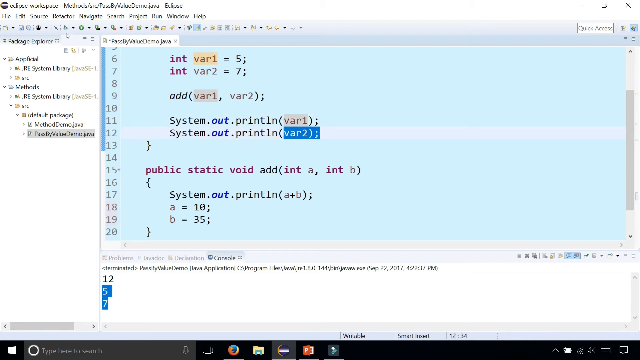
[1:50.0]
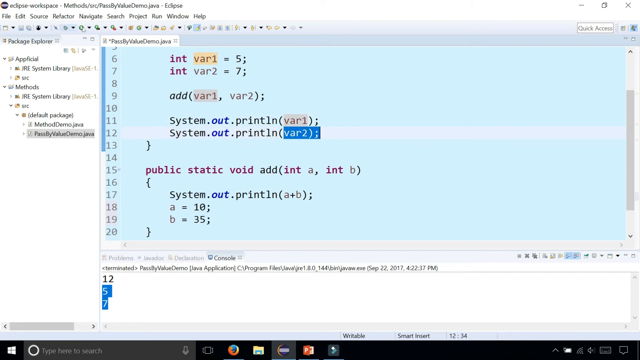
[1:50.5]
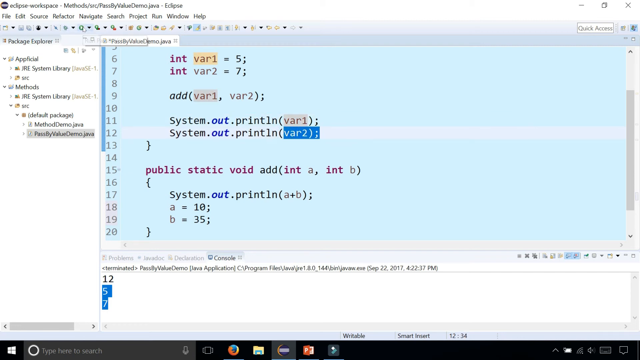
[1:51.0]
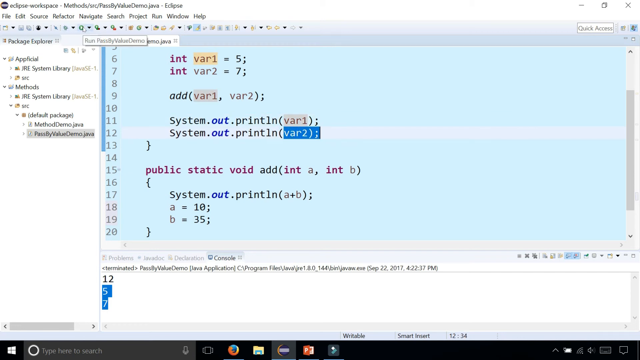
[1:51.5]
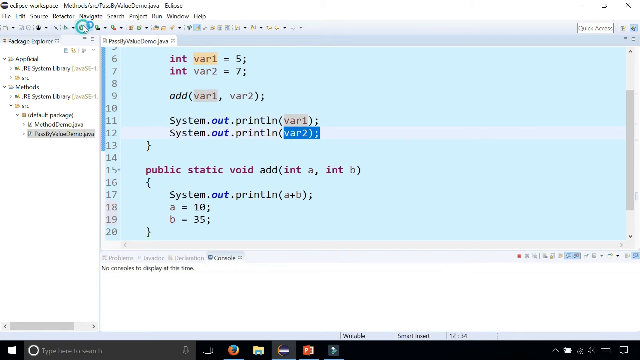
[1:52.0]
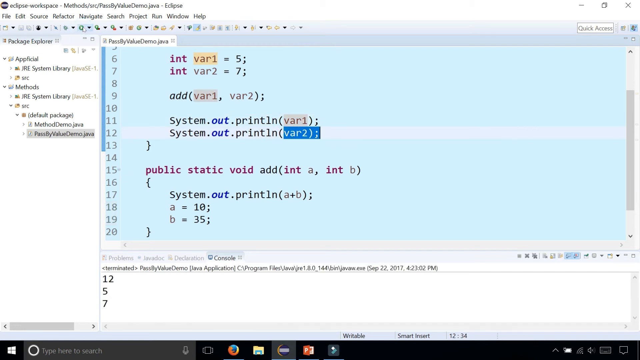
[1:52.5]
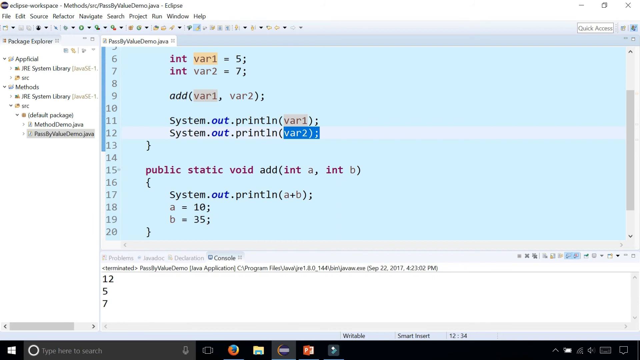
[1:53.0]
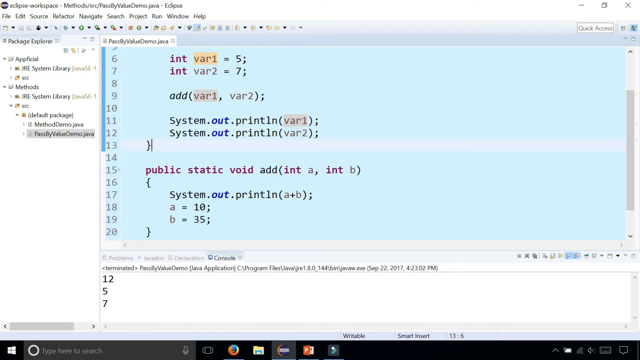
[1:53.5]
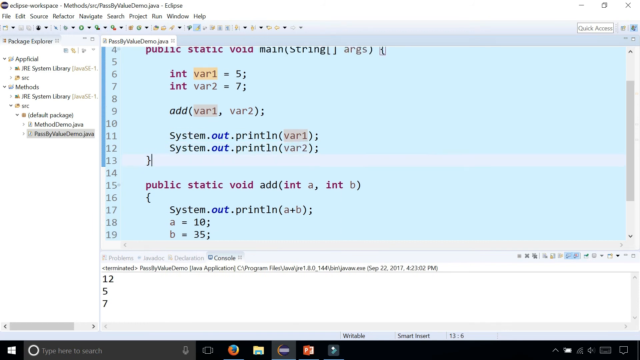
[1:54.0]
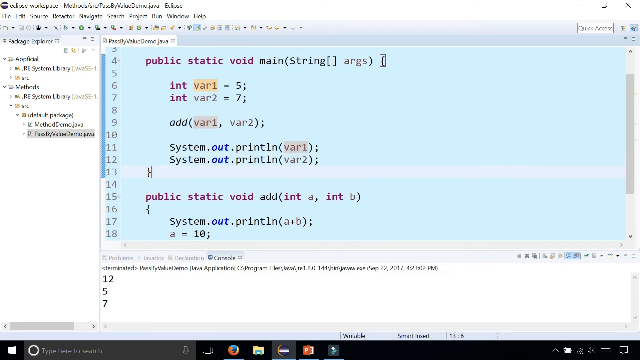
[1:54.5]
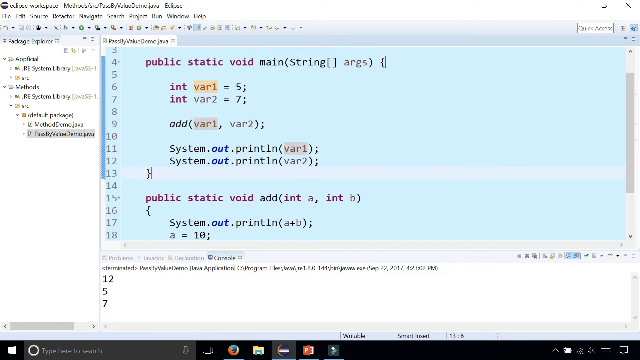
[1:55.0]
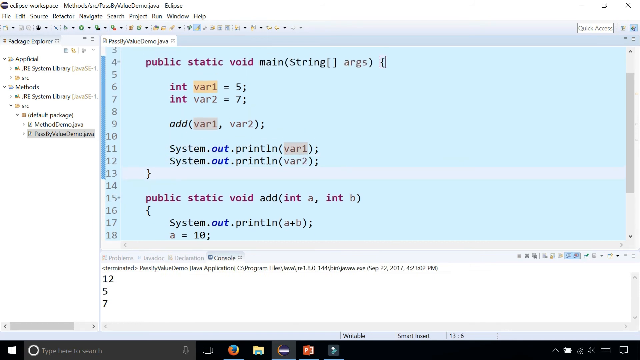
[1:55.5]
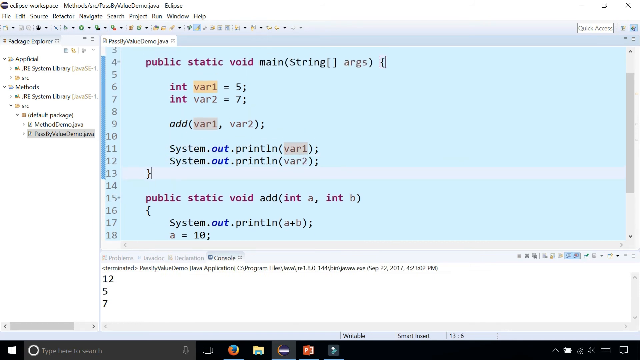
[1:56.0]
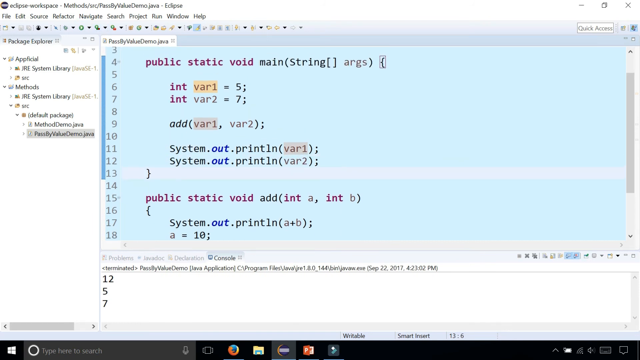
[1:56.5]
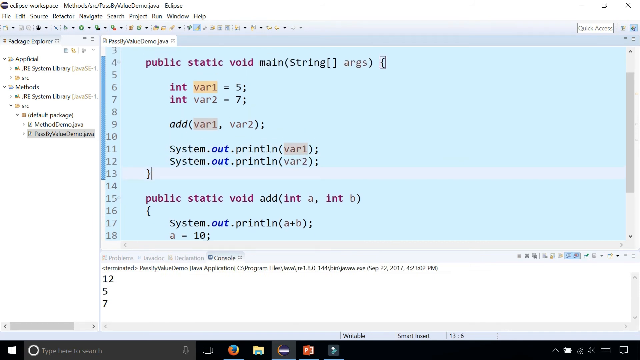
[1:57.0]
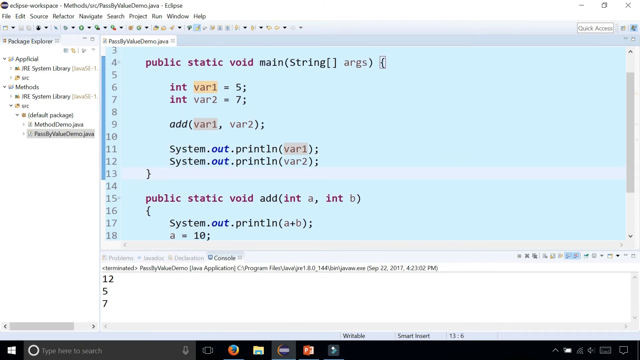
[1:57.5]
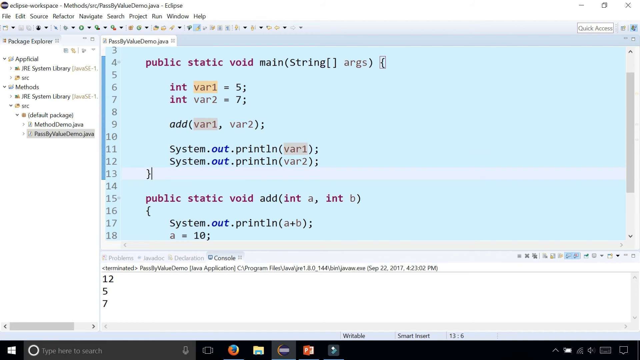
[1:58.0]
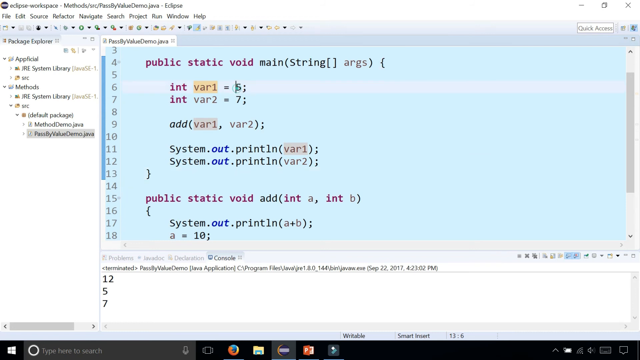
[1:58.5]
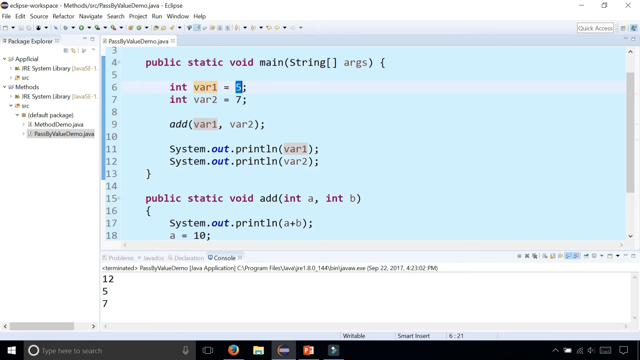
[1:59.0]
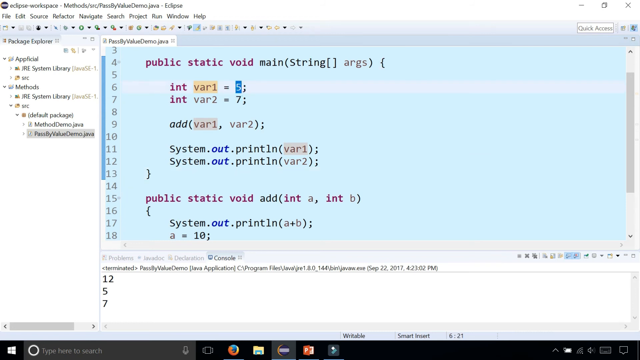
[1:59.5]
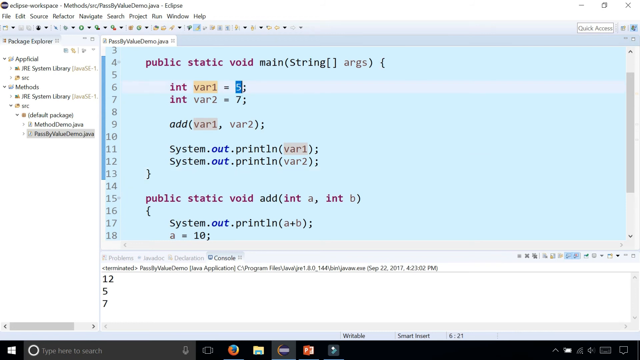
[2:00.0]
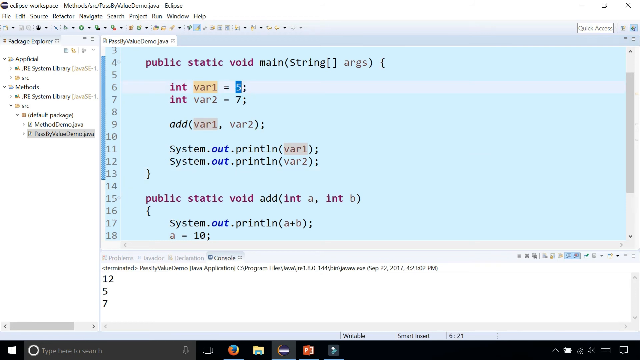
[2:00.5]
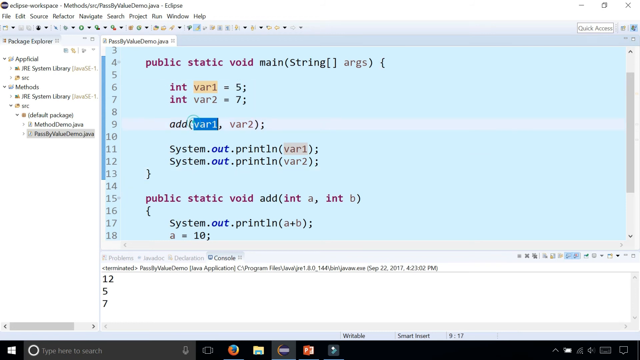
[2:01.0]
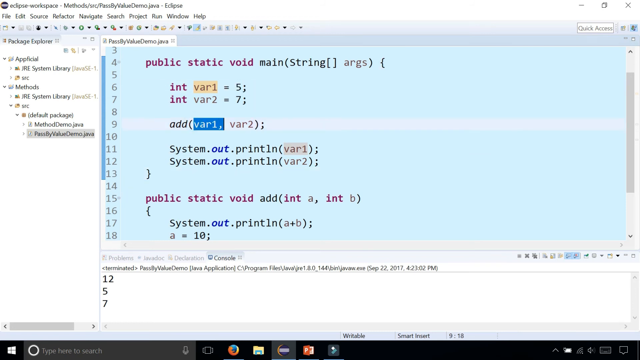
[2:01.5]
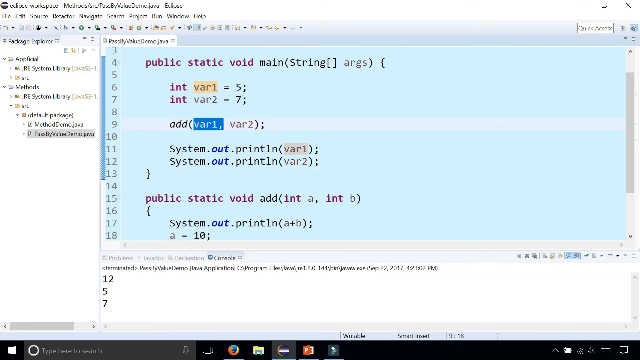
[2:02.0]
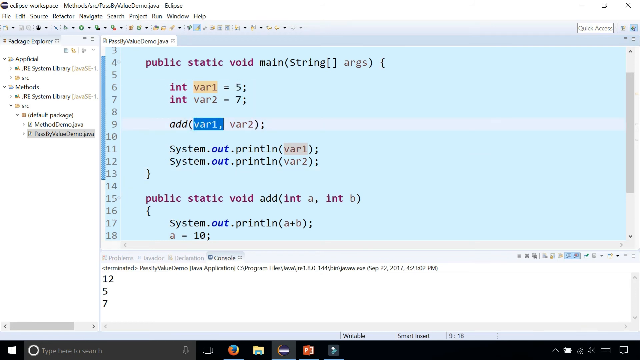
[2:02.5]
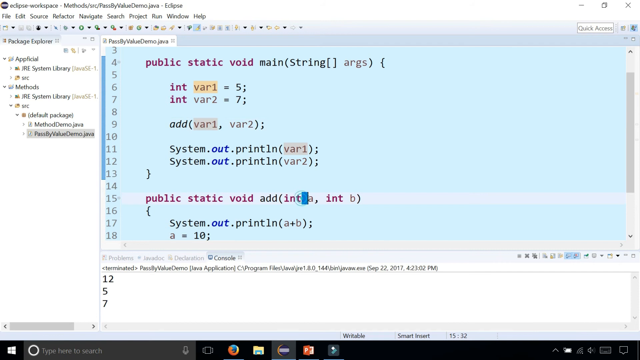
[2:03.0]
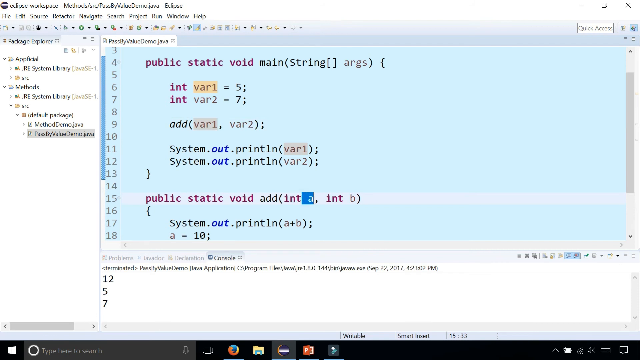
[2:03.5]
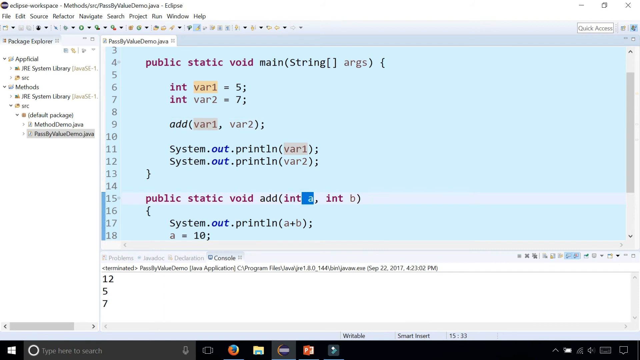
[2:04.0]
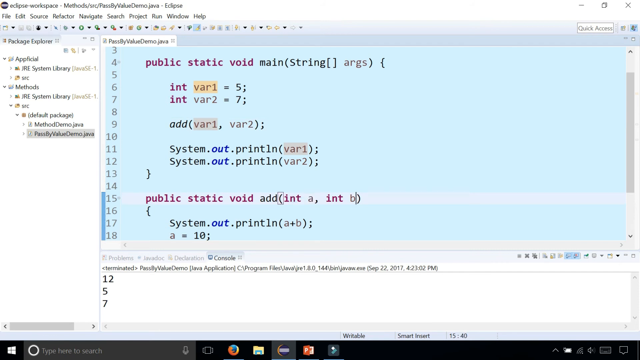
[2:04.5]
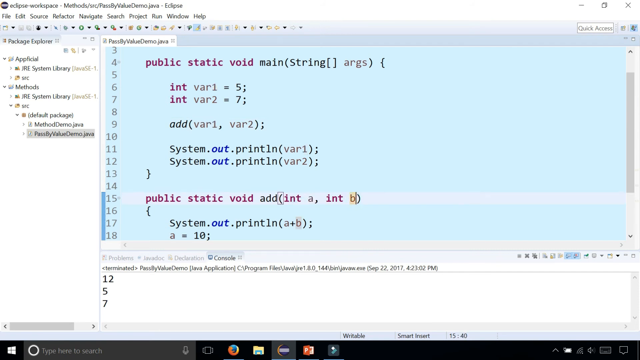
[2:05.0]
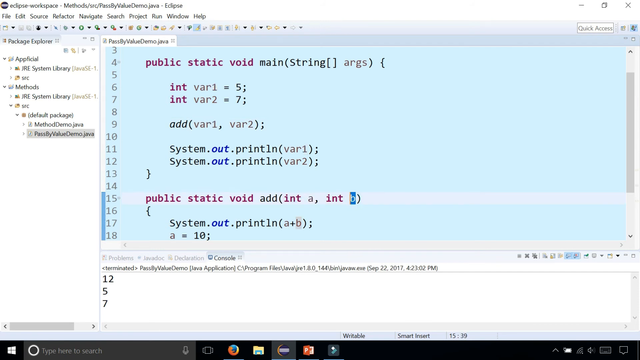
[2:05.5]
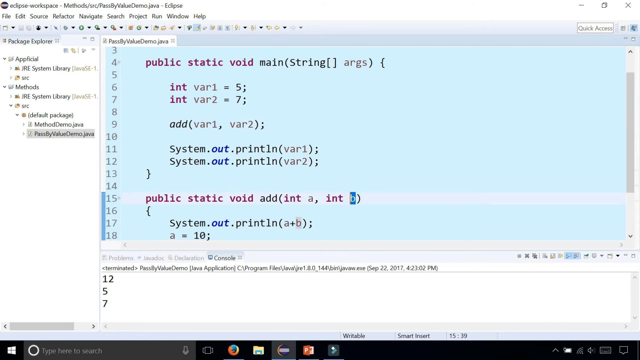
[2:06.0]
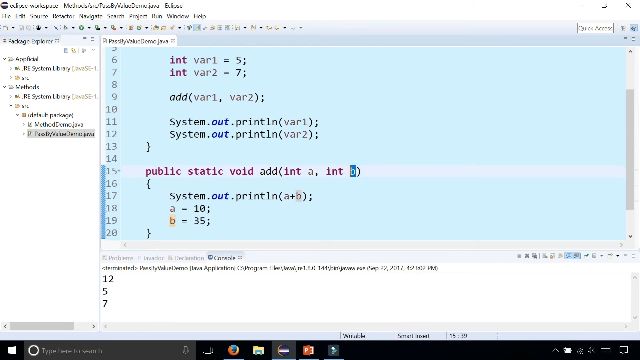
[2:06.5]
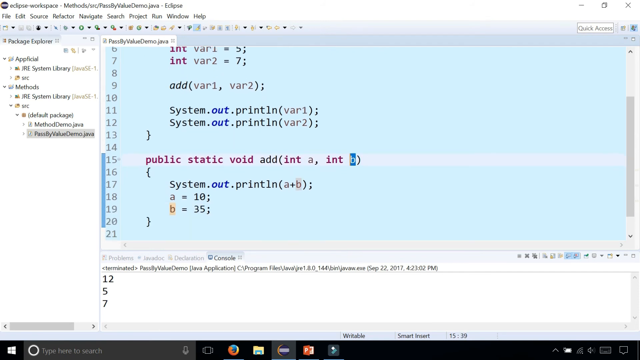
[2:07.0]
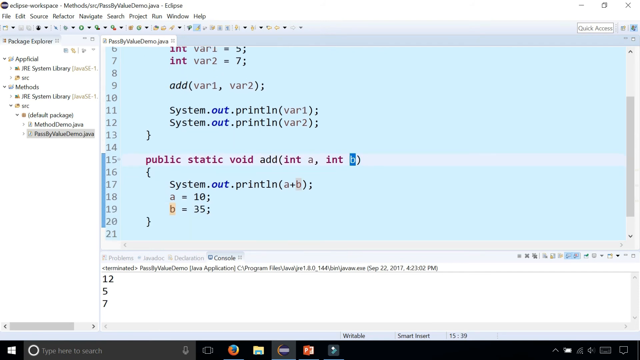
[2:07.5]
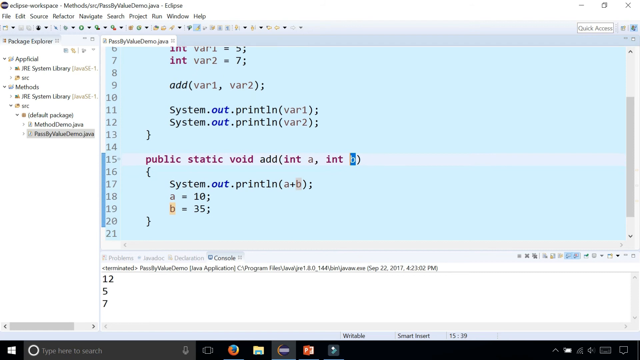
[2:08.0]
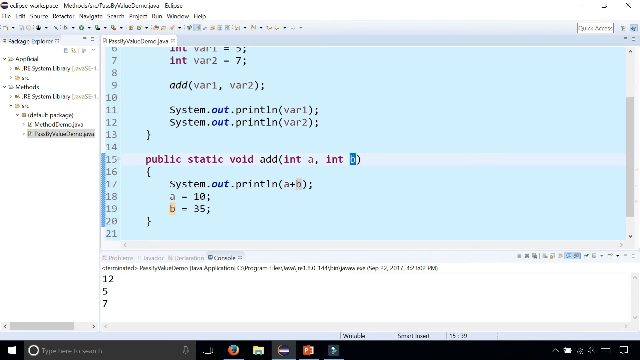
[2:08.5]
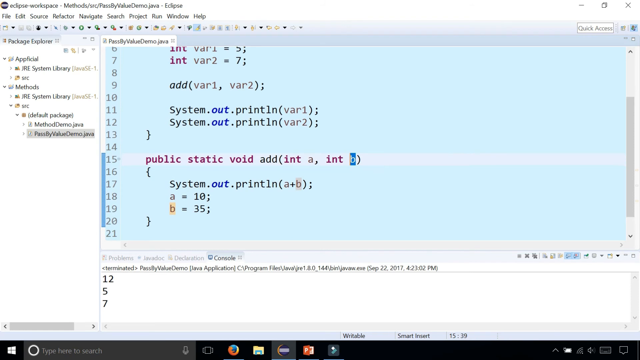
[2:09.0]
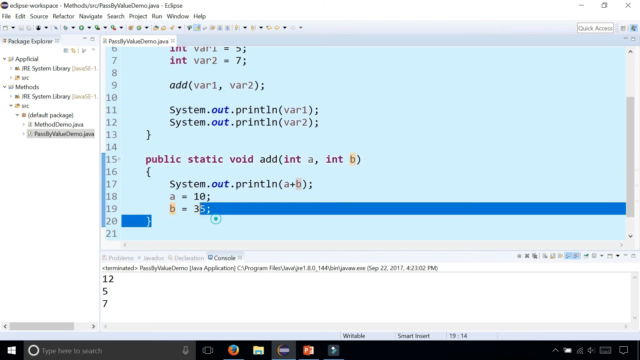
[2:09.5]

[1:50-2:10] The Eclipse Workplace screen shows the top menu File, Edit, Source, Refactor, Navigate, Search, Project, Run, Window, Help, with icons below it. On the left is a menu tree with Package Explorer, JRE System Library, Java SE, Default Package and PassByValueDemo.java, among other items. The center of the screen is a large text field for typing, with numbers along its left side starting at 1; as instructions are typed, rows are added and numbered, and the numbers climb higher. Across the bottom is a smaller screen with the Console tab selected, showing 12, 5 and 7. Someone scrolls up and types in line 6. They highlight "B-A-R" in line 9, then int a and int b in line 15, and then lines 20 up to 17.